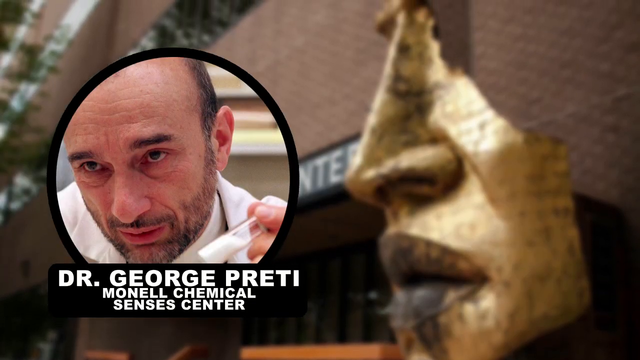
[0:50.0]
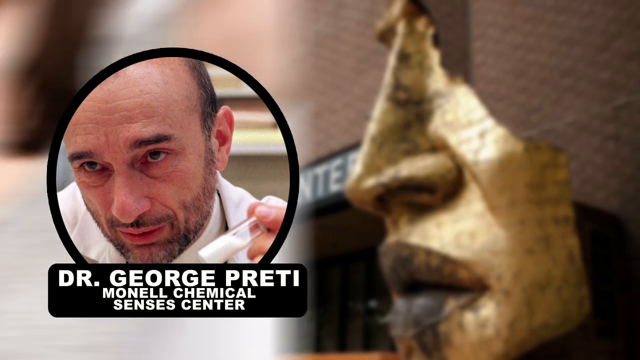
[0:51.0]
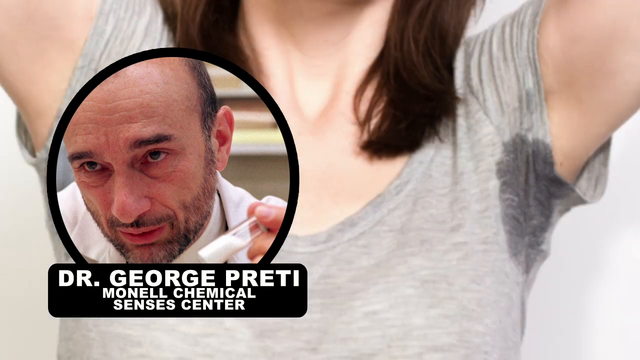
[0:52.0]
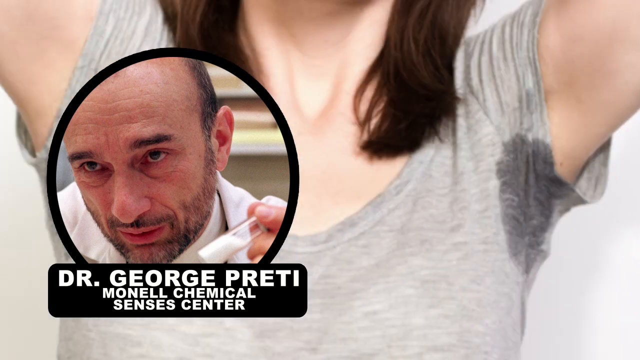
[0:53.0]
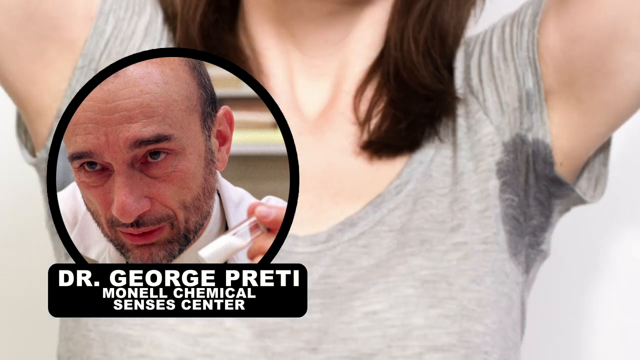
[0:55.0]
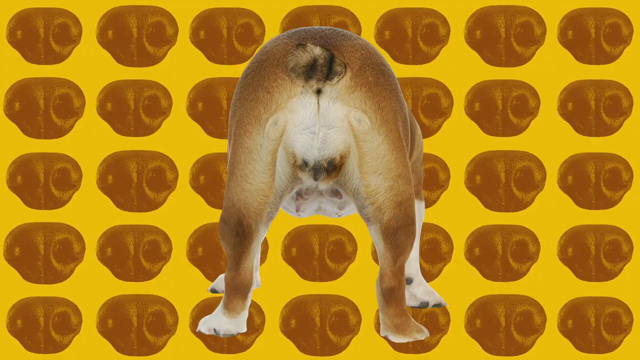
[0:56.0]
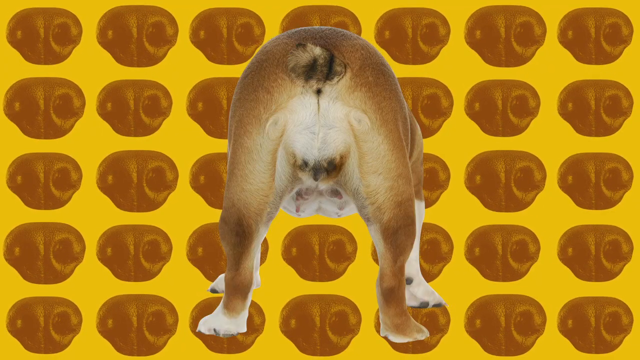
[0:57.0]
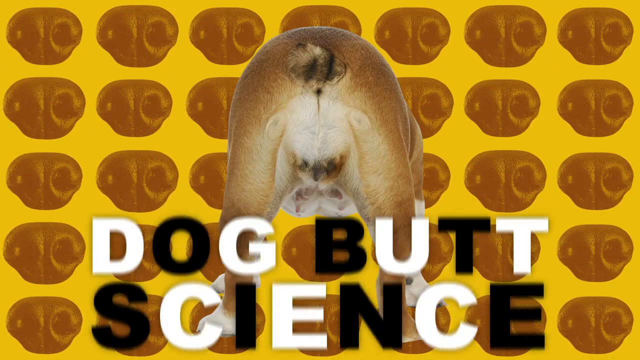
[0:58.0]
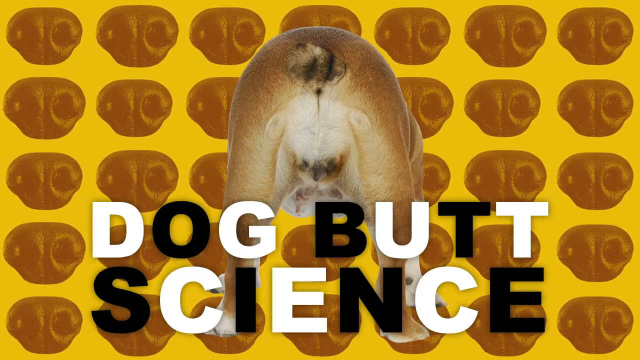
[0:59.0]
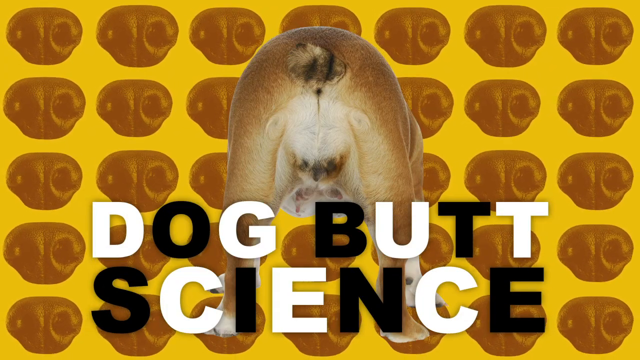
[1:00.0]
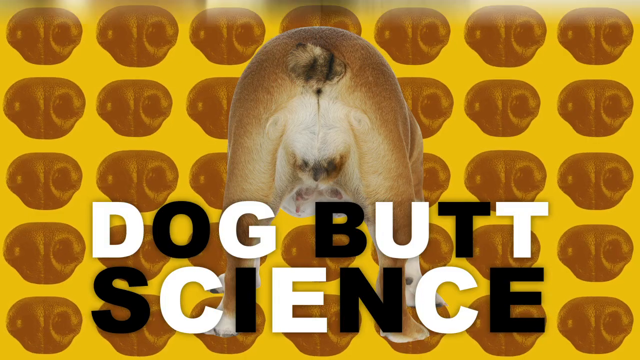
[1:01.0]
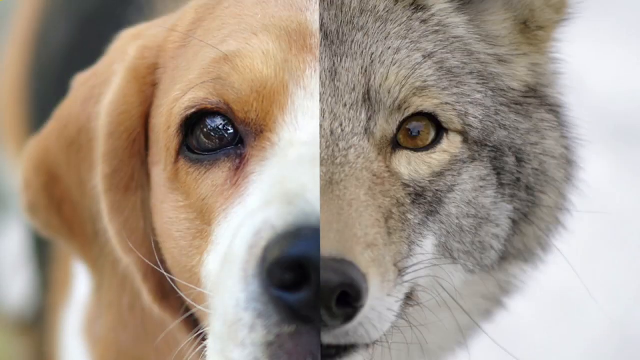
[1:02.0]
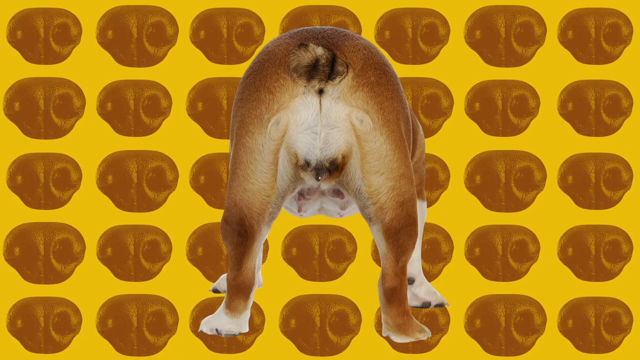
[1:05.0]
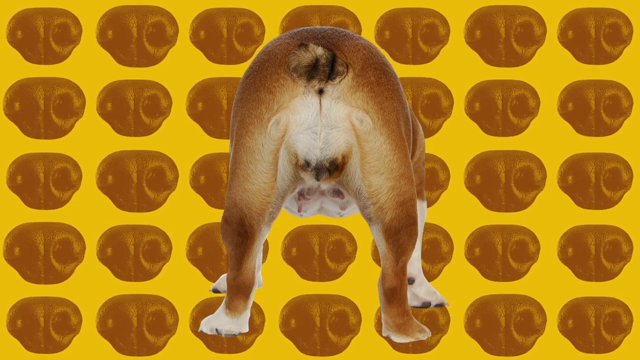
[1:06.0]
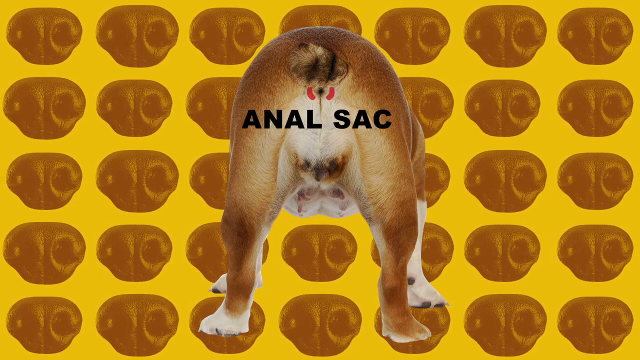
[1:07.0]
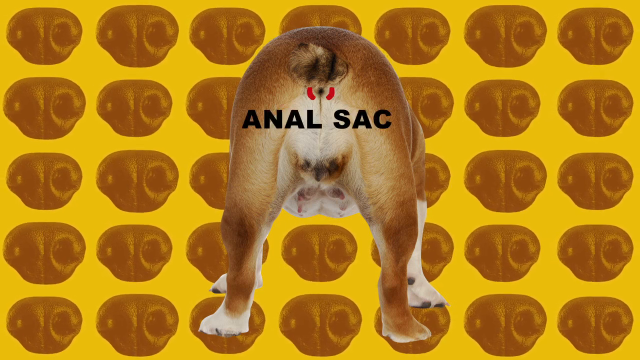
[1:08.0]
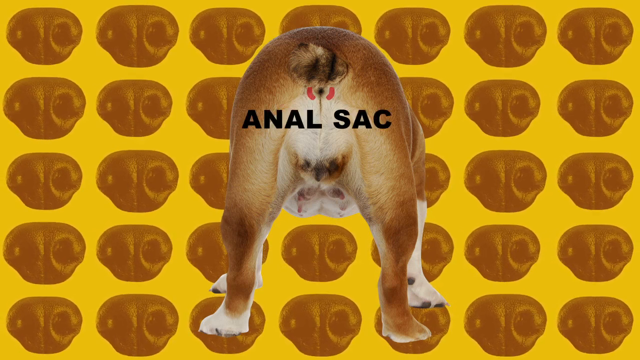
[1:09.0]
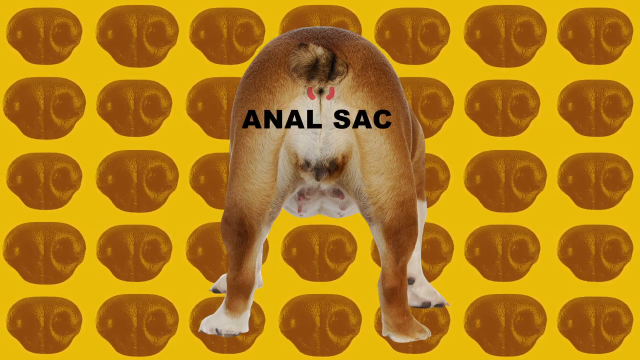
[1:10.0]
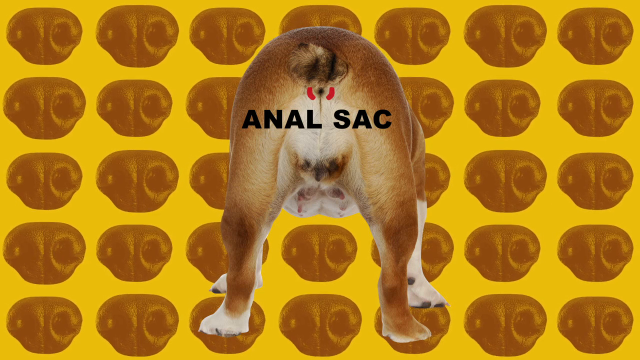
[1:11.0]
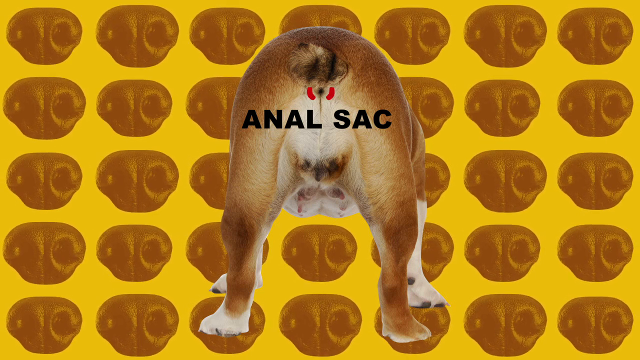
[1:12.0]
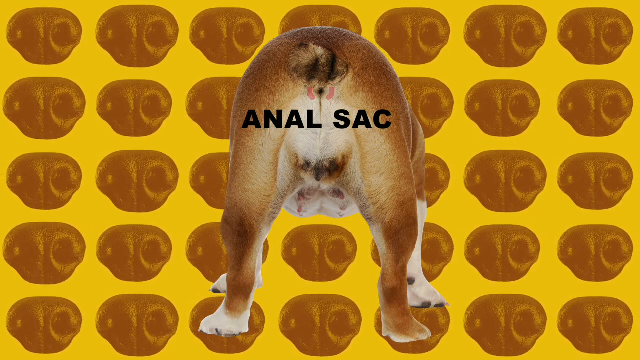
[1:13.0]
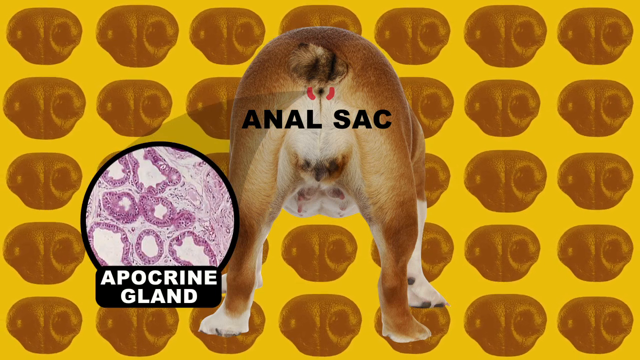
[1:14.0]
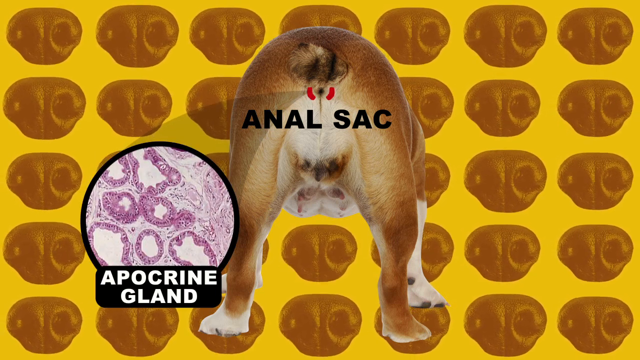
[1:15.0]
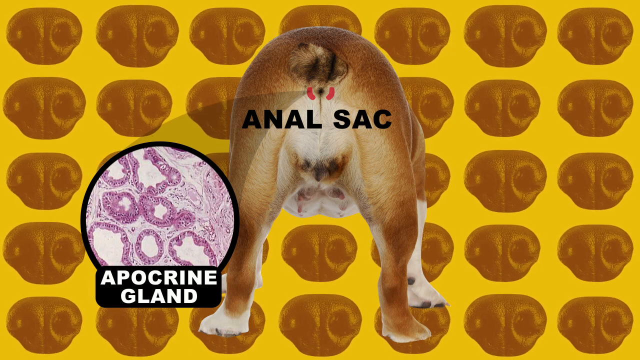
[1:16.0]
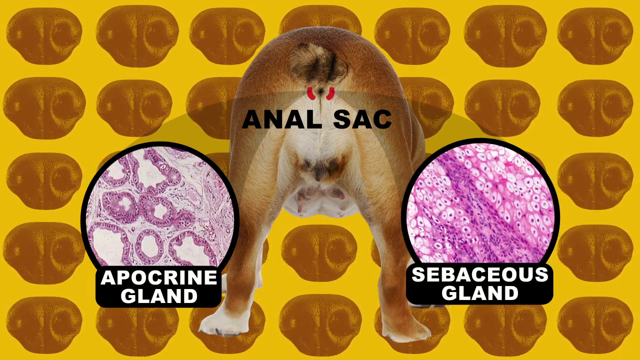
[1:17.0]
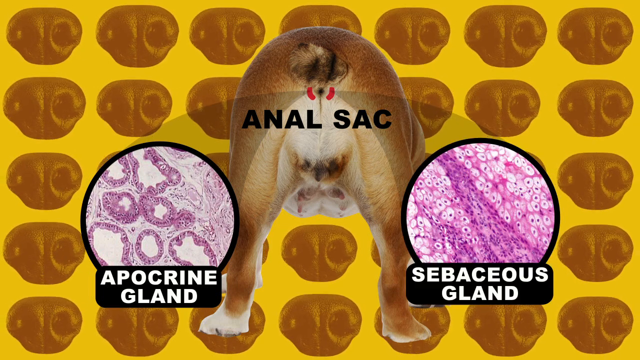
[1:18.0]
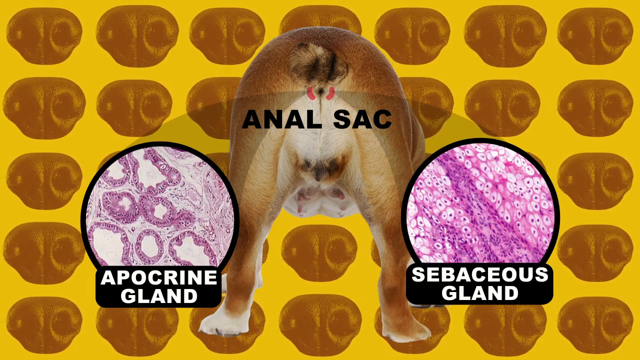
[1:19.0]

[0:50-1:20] A man appears on the left side of the screen, with text underneath him identifying him as Dr. George Preti, Bonnell Chemical Senses Center. The video then shows a woman's underarms, where wetness on her shirt shows she has been sweating. The next screen shows a dog's rear end in the foreground with a bunch of dog noses superimposed in the back, and the text "Dog Butt Science." The video then changes to a split screen with a wolf on the right side and what looks like a beagle on the left side.